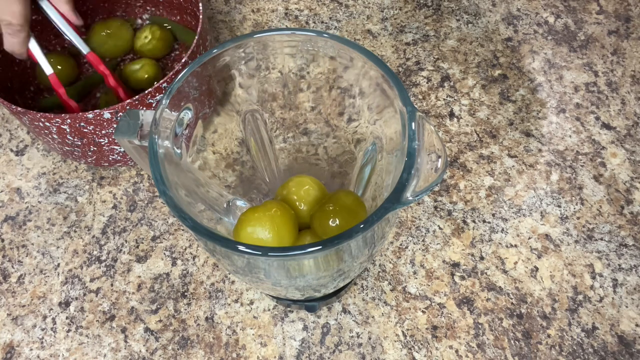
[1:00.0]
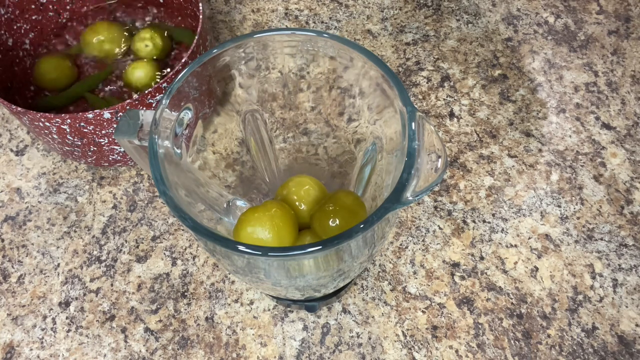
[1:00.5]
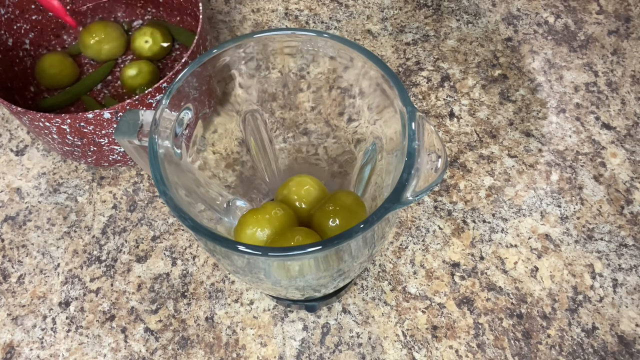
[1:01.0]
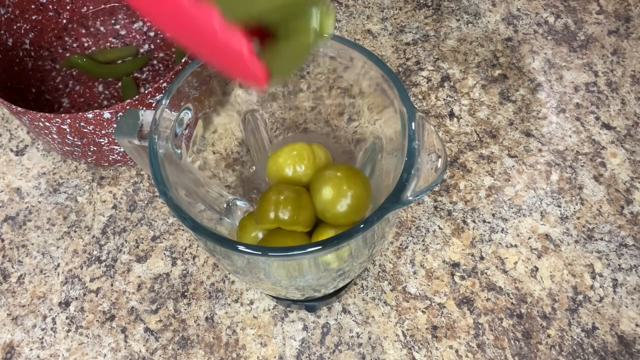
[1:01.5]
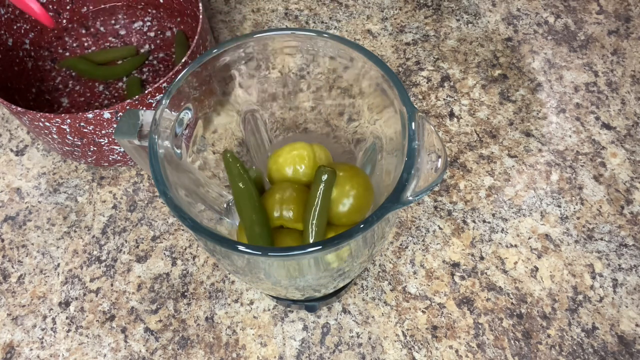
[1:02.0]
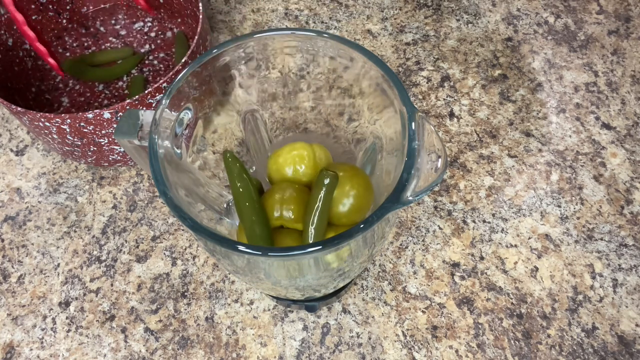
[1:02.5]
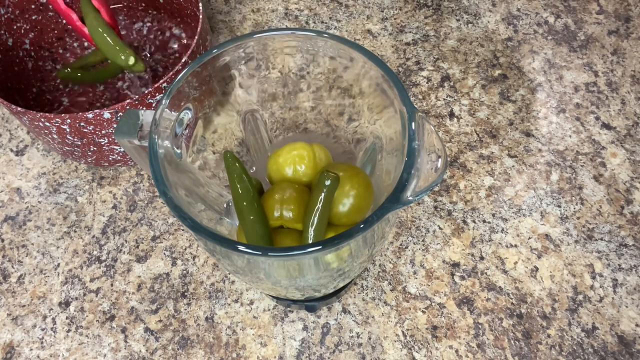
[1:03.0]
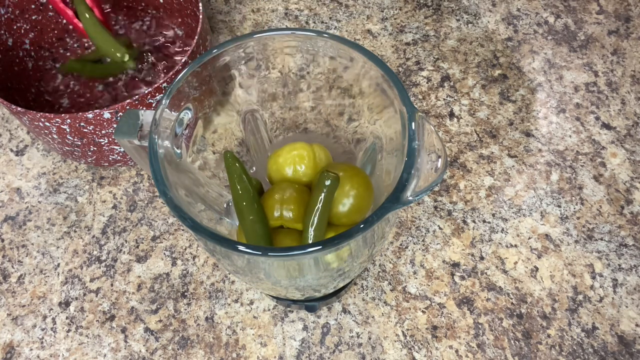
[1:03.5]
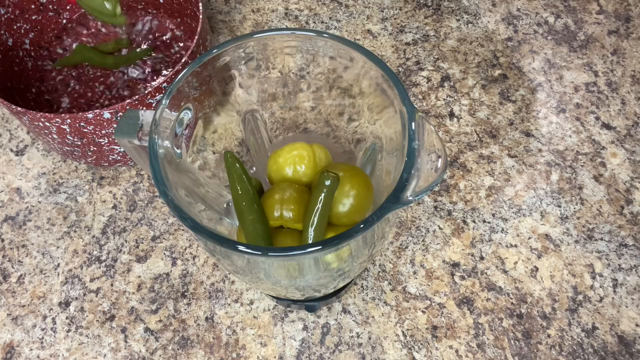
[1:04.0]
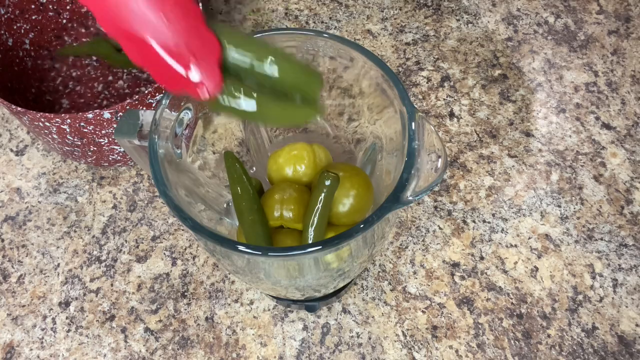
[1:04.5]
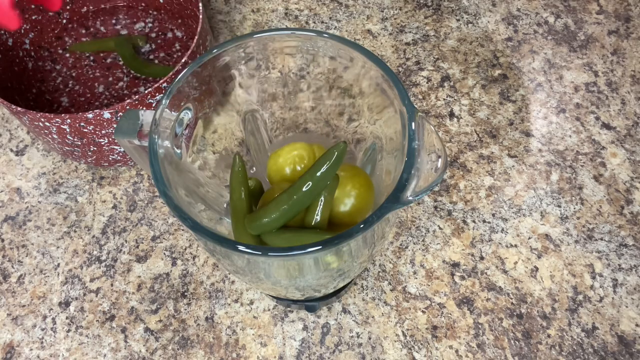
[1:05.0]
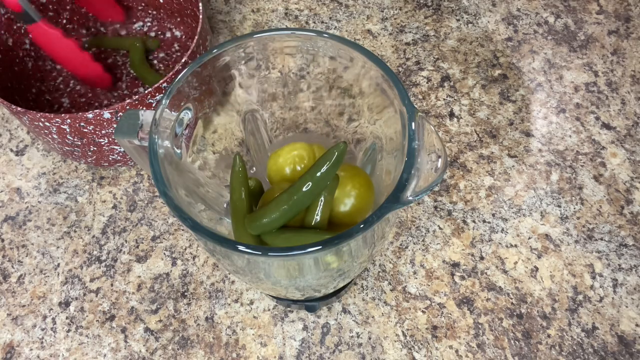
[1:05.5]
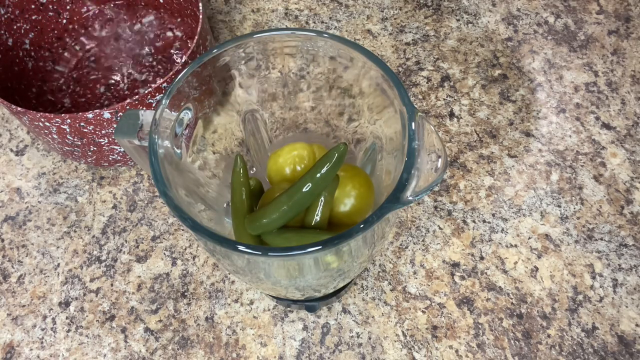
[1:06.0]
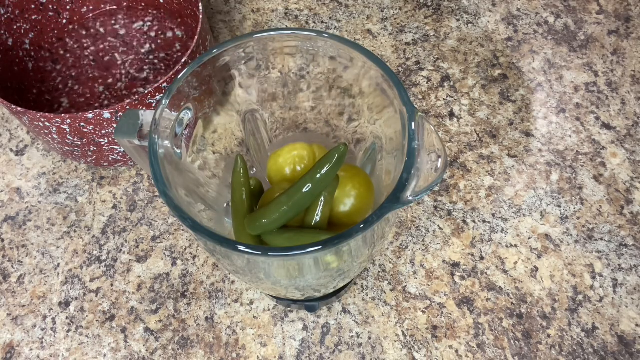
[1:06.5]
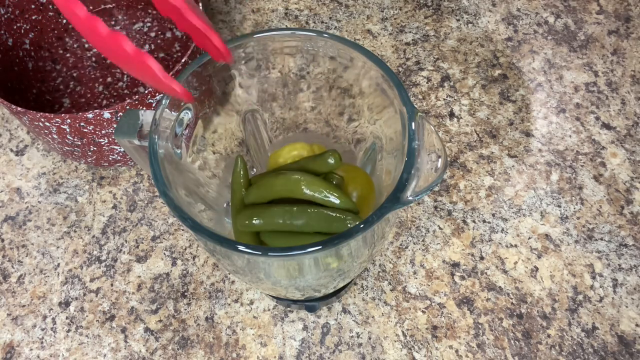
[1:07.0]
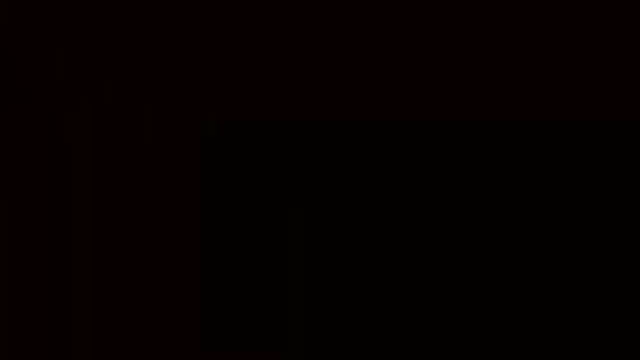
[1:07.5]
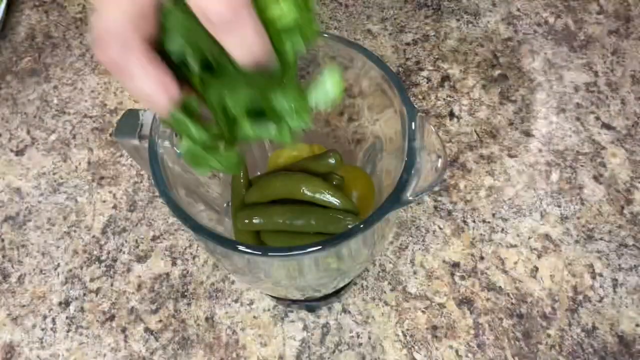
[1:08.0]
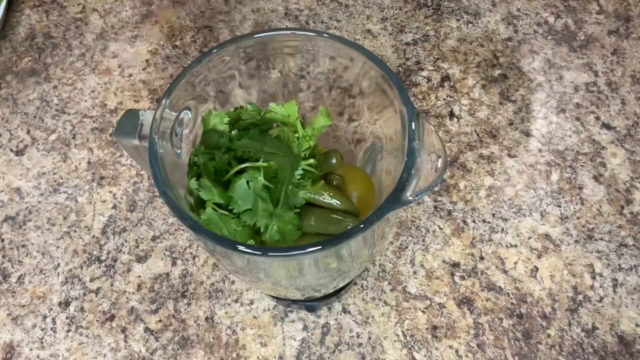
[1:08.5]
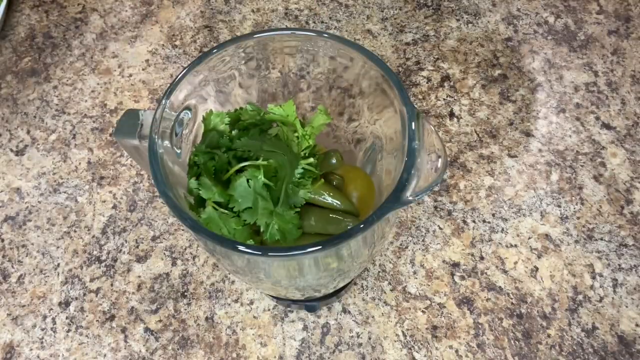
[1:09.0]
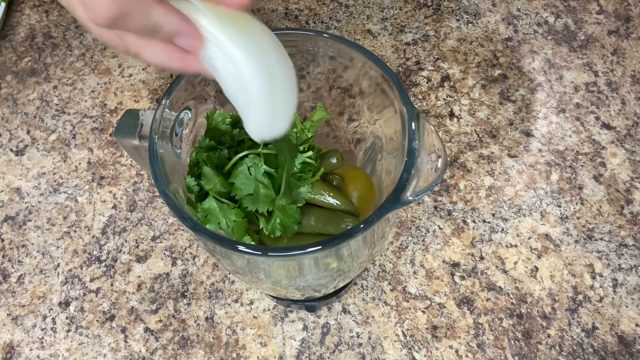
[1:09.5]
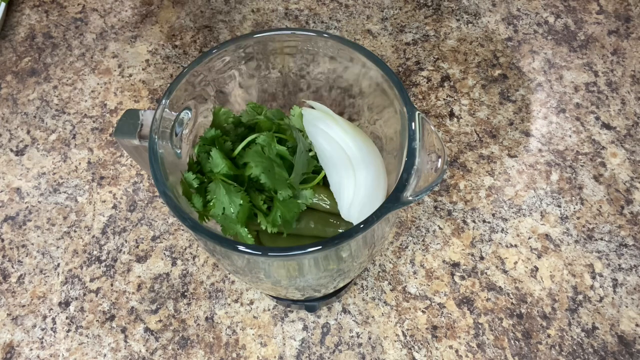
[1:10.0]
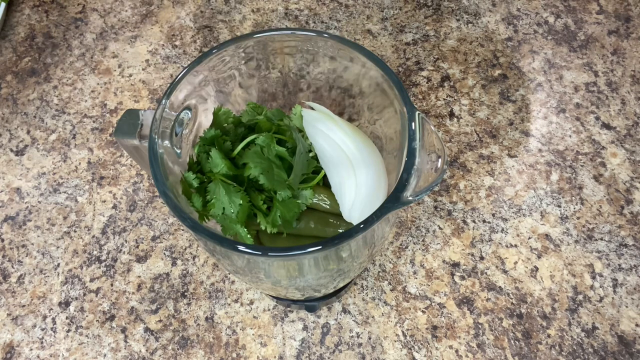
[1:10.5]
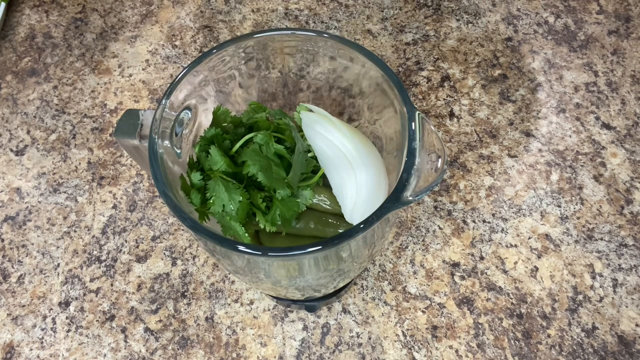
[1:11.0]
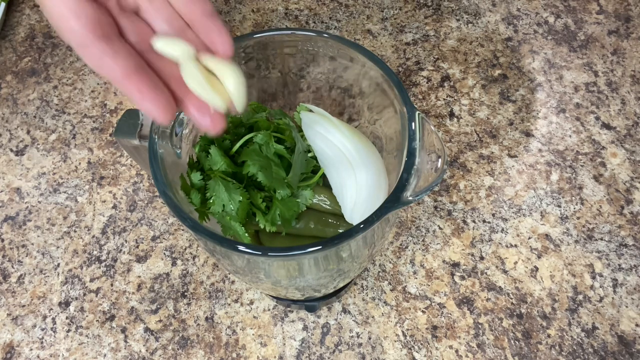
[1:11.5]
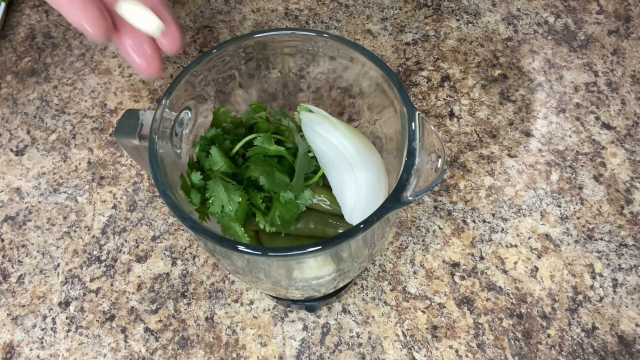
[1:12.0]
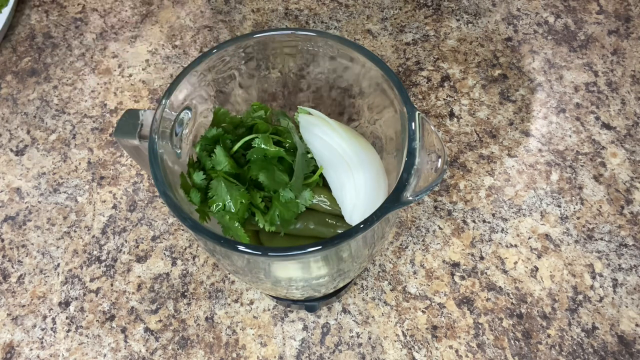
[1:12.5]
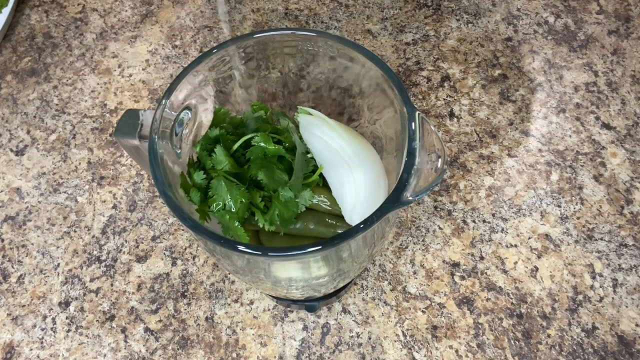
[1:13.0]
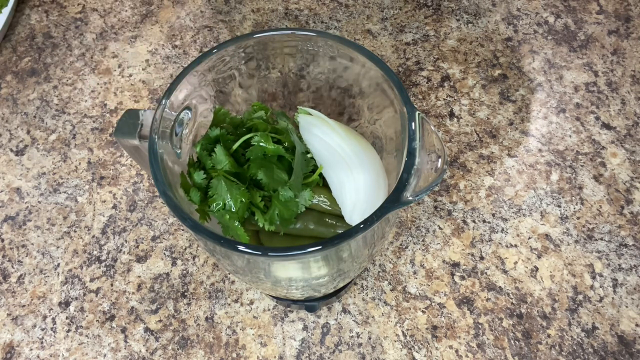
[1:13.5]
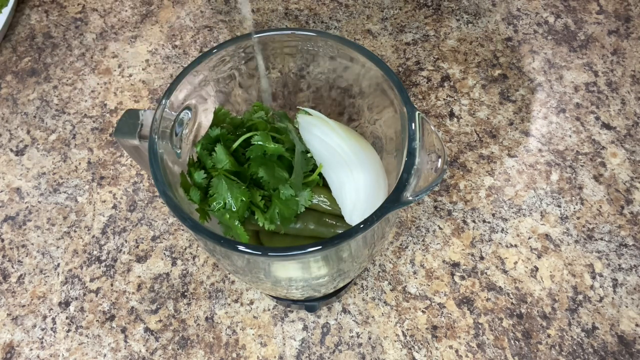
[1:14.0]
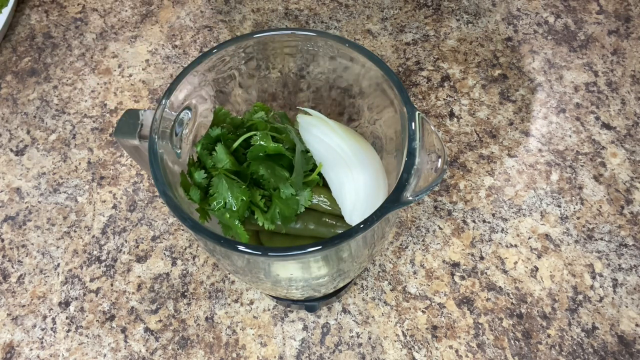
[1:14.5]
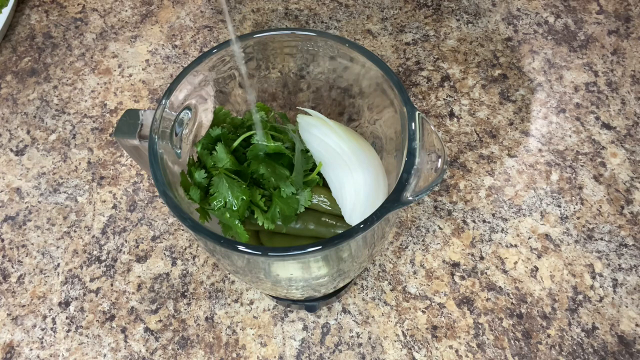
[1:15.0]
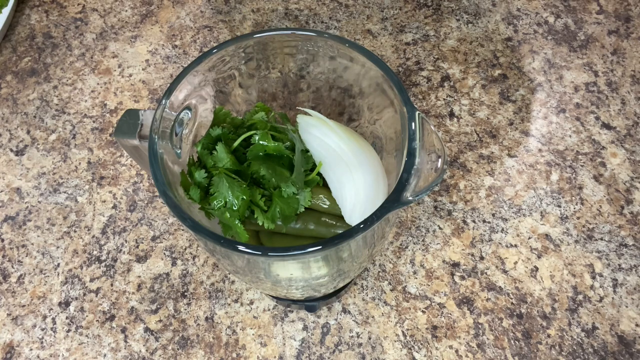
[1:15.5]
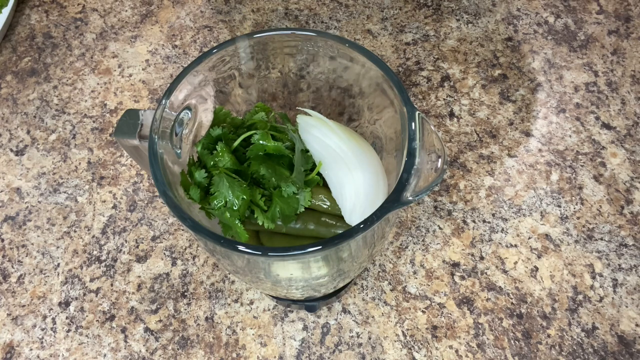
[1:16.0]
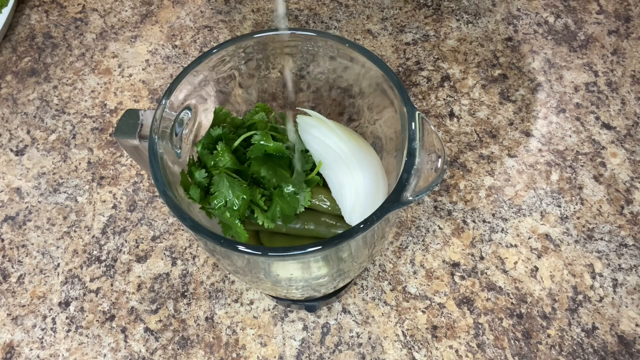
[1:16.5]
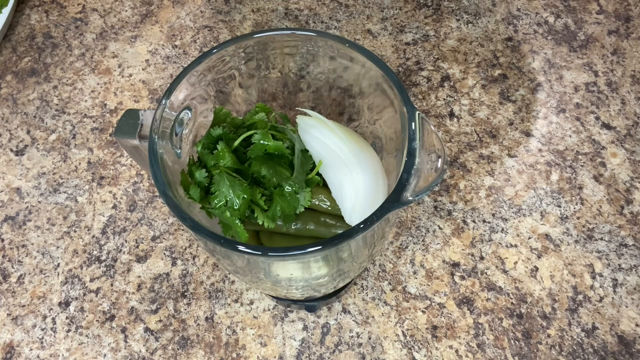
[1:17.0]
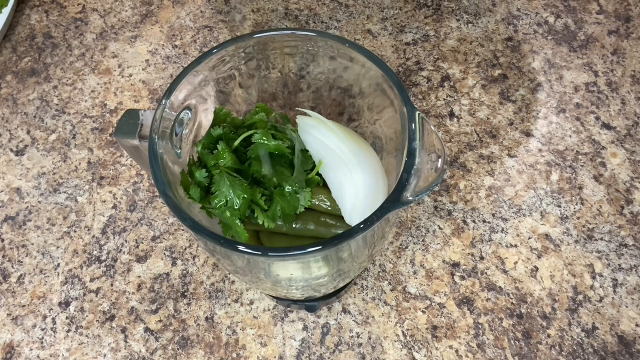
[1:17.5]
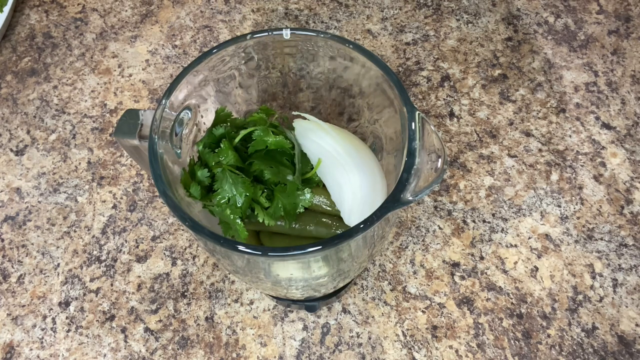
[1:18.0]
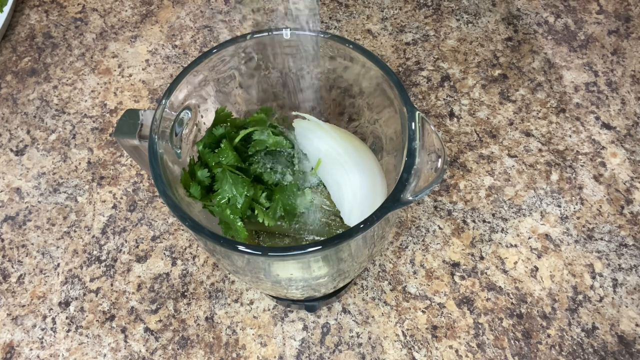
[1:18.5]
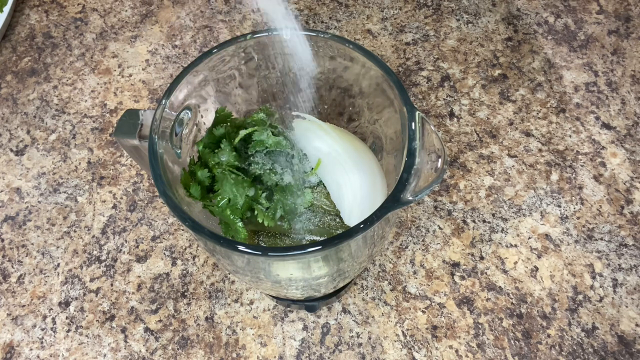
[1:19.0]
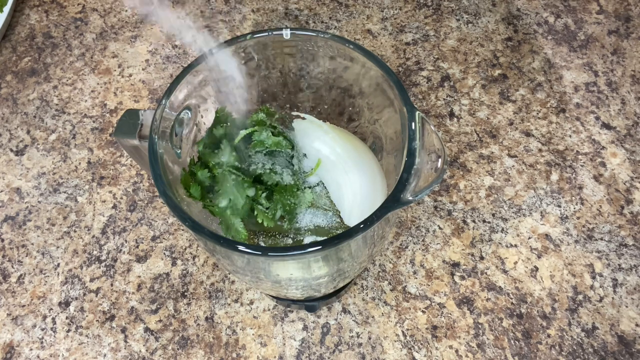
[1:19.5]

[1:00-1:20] A glass container is on a ceramic table, with olives on the table. From the top left, tongs pick up olives and drop them into the glass container. Next, pink tongs pick up peppers and drop them into the glass container, with liquid dripping into the container along with them. All the vegetables from the pink container are transferred into the glass container. The scene then shows just the glass container as a hand from the top left of the video drops in vegetables. One large chunk of onion is put into the container, followed by smaller chunks and small bits of onion. Salt is then dumped into the container.